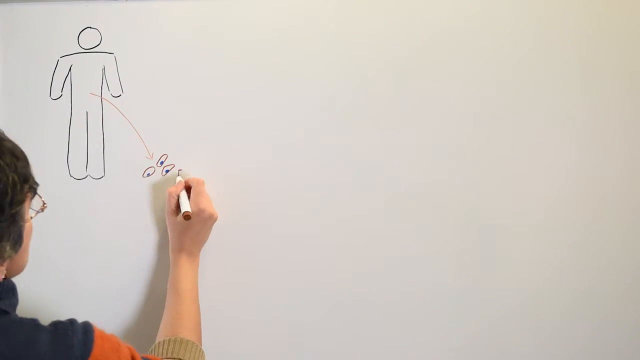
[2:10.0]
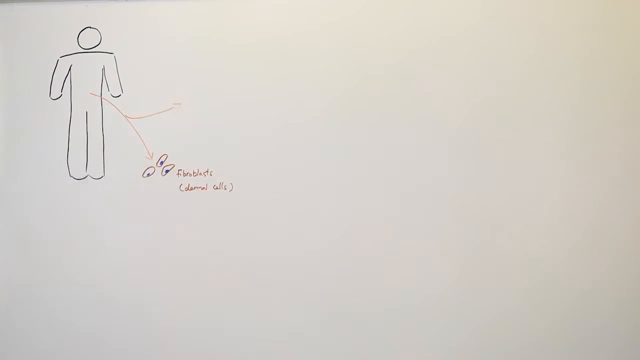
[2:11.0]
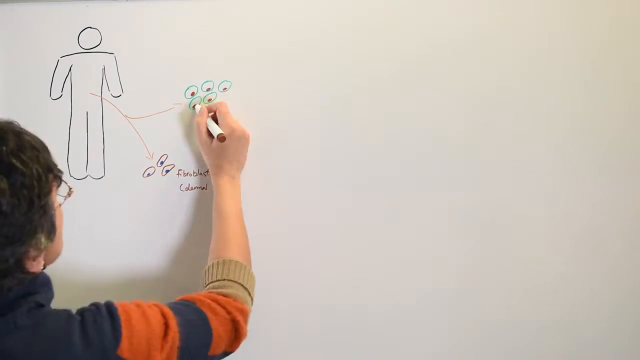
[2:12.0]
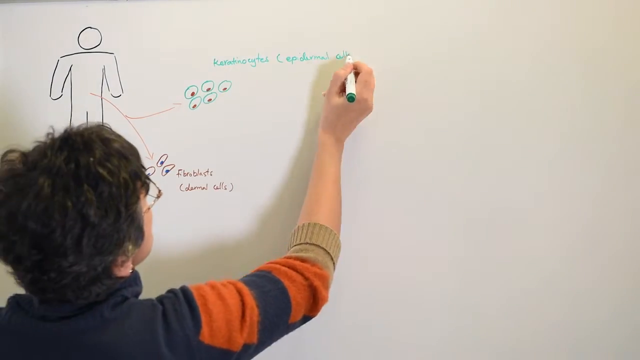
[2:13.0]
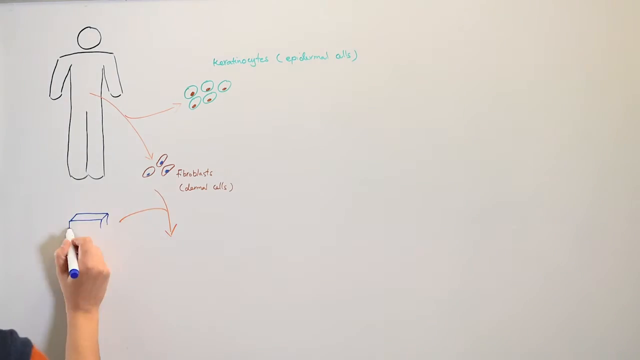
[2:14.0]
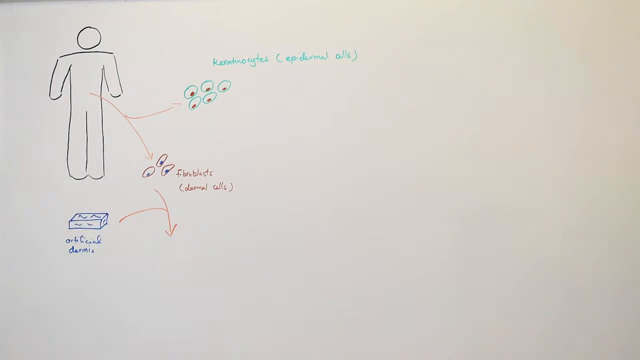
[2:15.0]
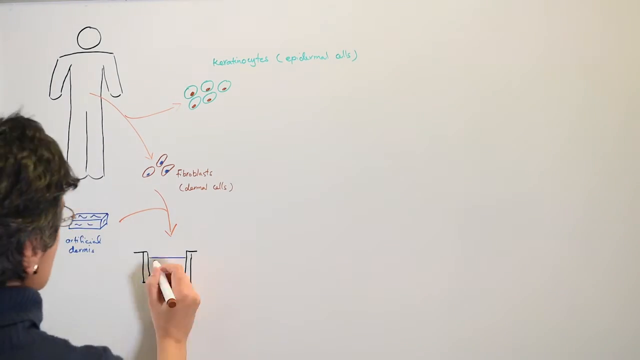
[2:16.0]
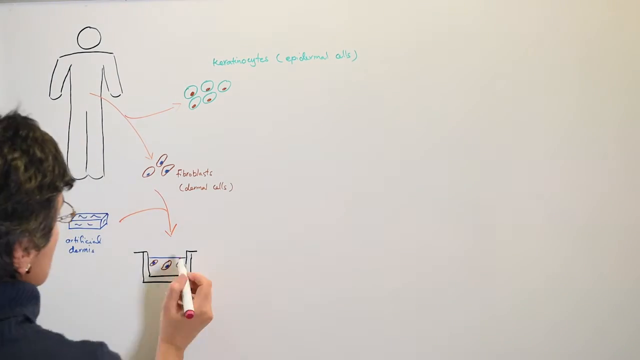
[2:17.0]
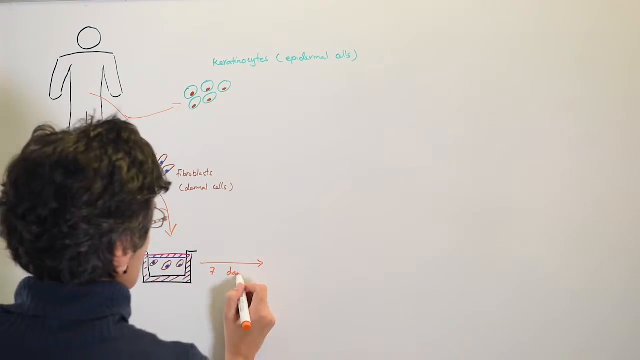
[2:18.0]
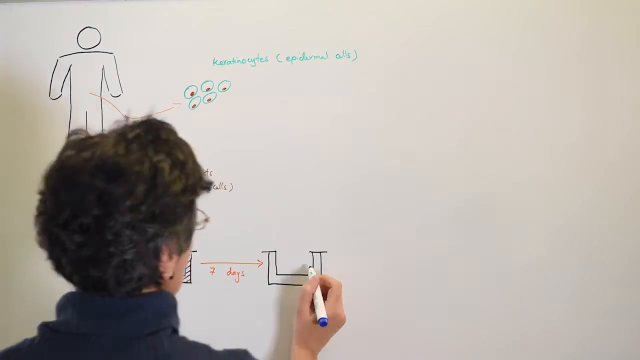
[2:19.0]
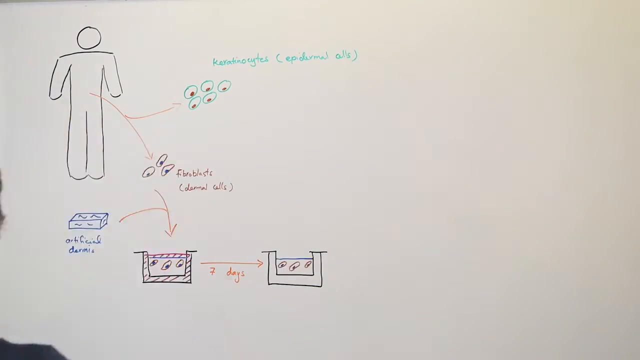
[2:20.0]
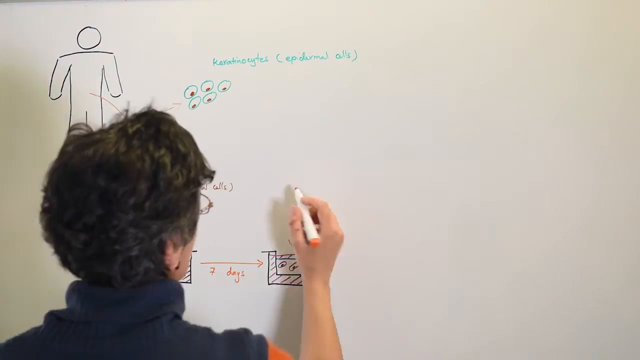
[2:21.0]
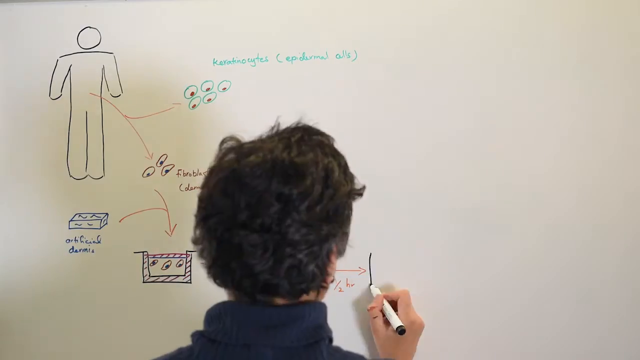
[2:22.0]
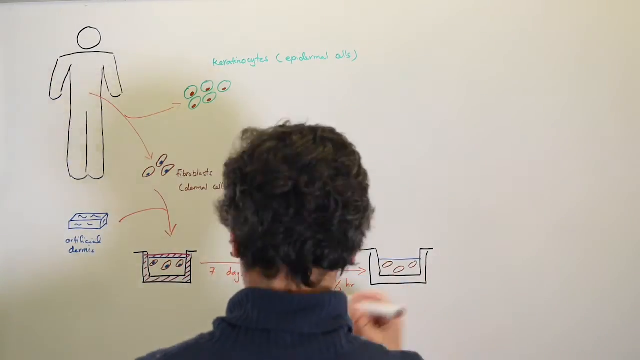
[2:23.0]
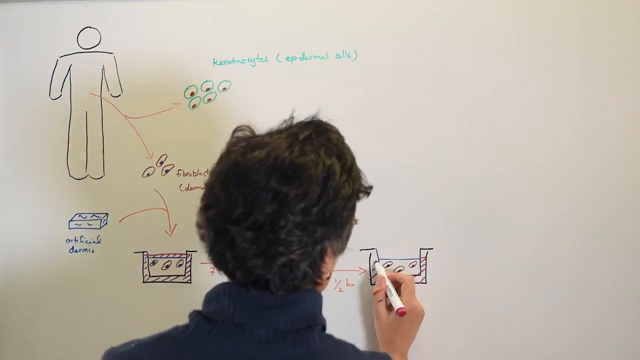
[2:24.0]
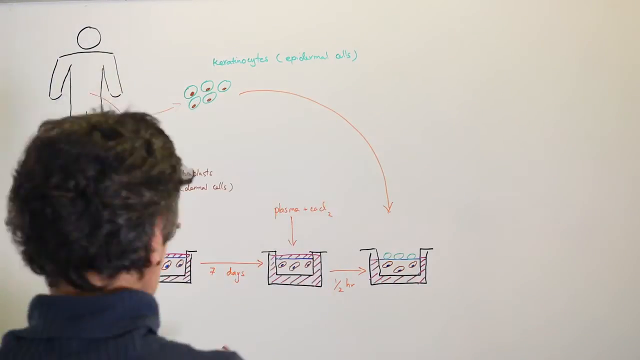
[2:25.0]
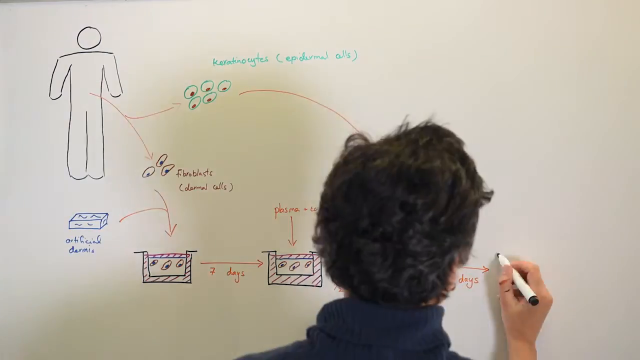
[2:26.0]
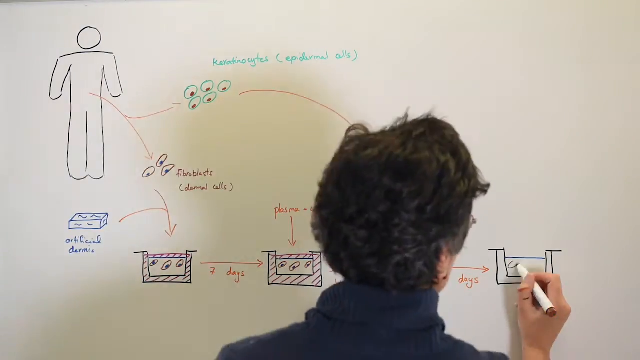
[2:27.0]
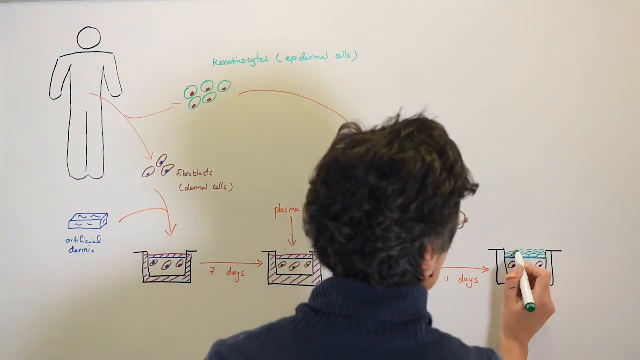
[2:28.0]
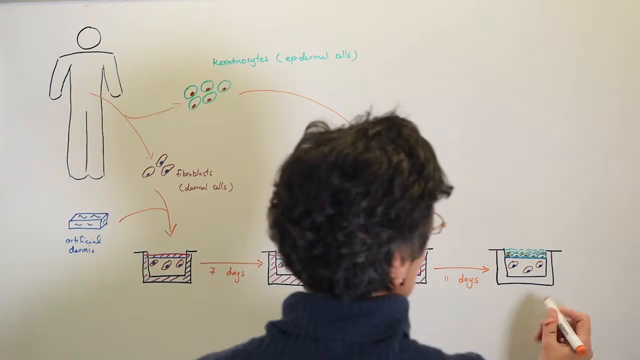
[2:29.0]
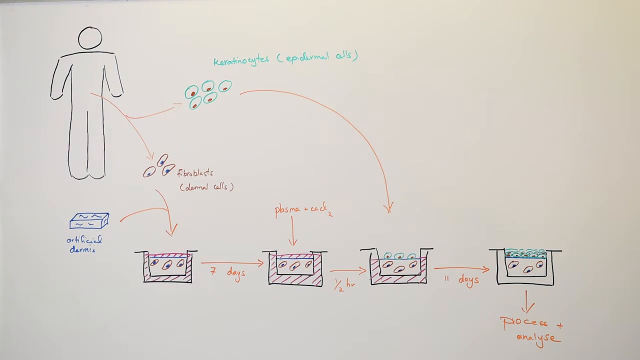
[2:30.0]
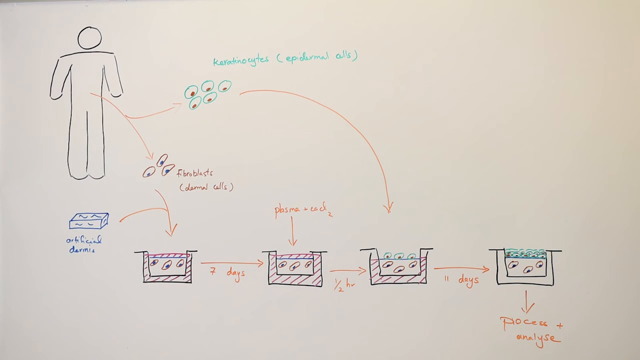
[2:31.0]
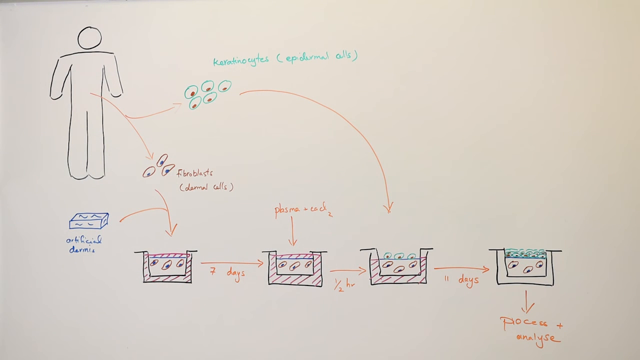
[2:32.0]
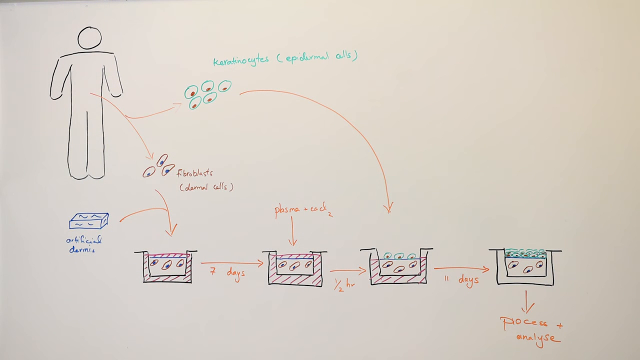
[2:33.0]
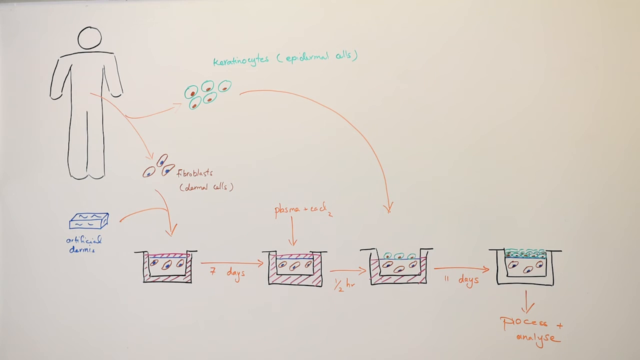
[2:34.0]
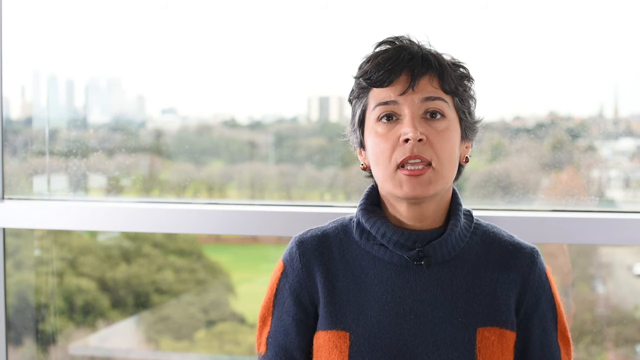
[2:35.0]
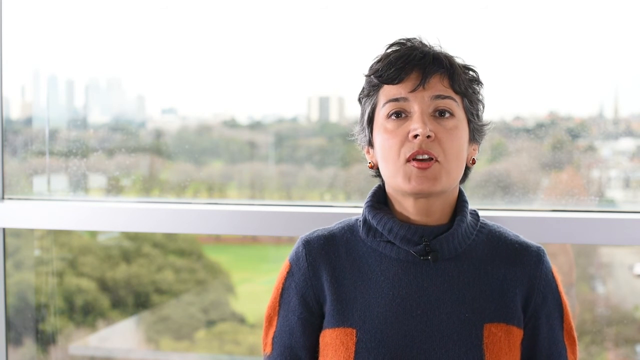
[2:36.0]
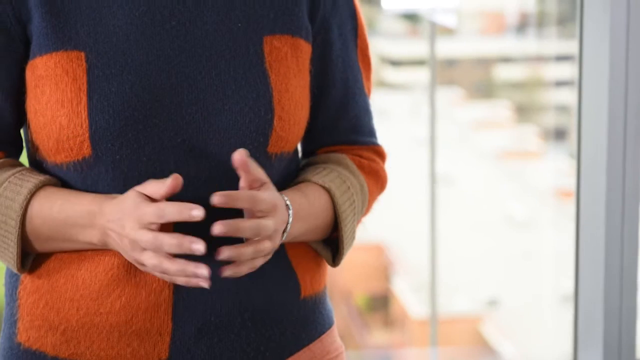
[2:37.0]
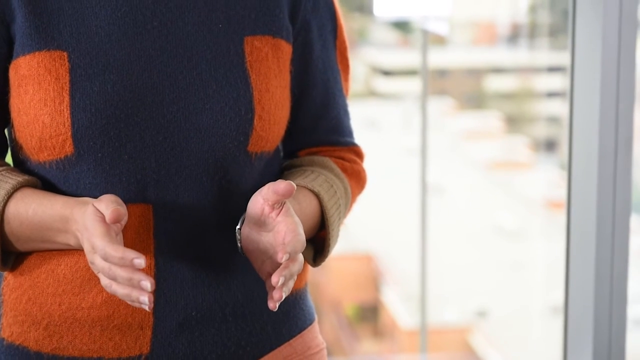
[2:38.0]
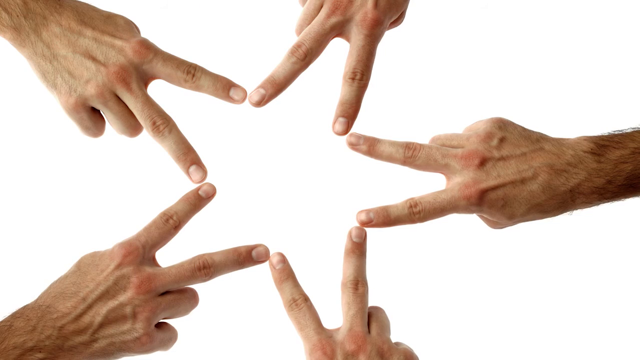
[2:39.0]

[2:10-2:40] A woman draws very fast, kind of in fast motion, on a dry erase board with a green dry erase marker. She draws little dots in circles, almost like cells, right next to the outline of a human body, with a line indicating these are kind of in the stomach area. She has written "keratocytes" and "epidermal cells" beside circles with dots in them. Toward the bottom she has drawn "fibroblast", labeled "dermal cells". Still drawing very fast, she draws boxes at the bottom, puts labels over them and connects more arrows on the screen.